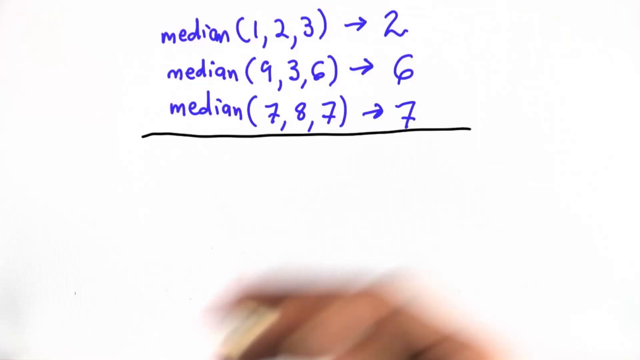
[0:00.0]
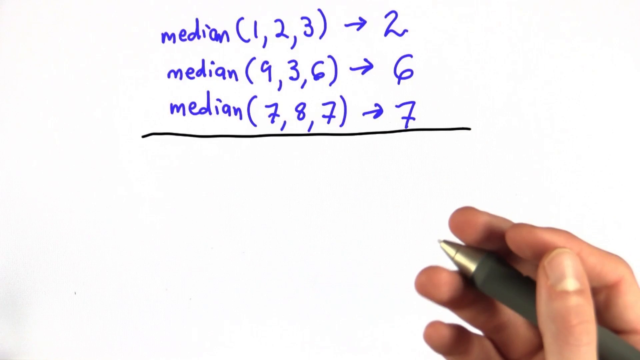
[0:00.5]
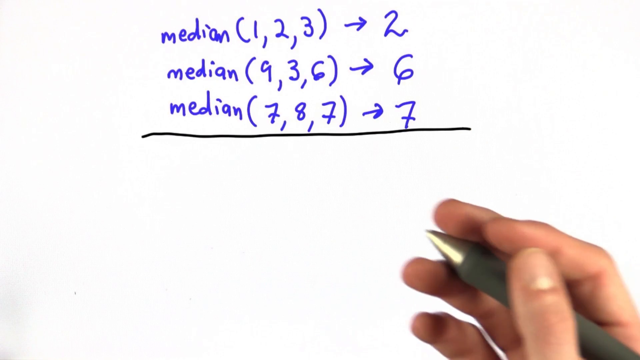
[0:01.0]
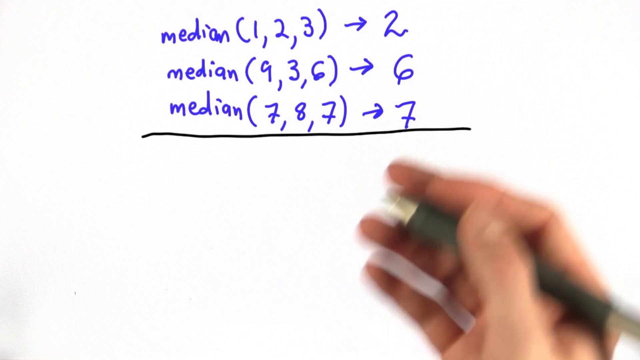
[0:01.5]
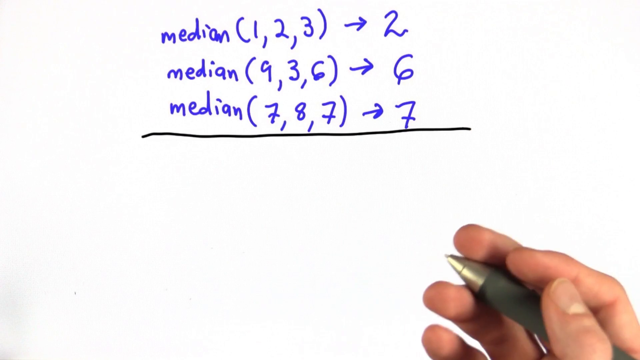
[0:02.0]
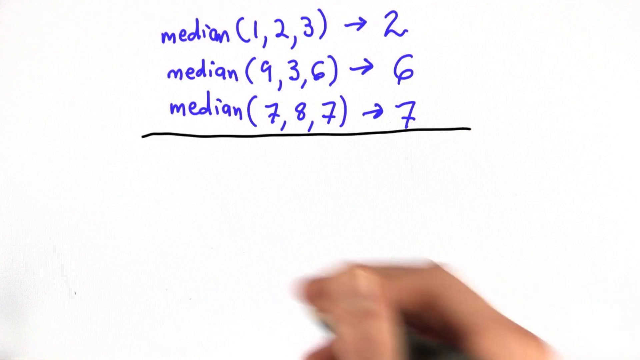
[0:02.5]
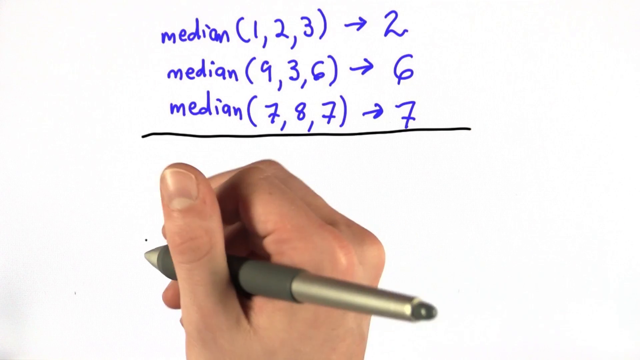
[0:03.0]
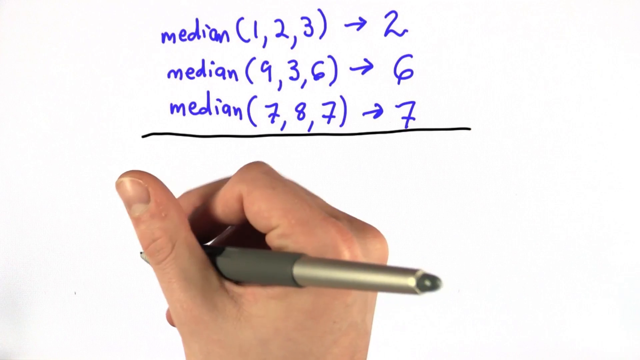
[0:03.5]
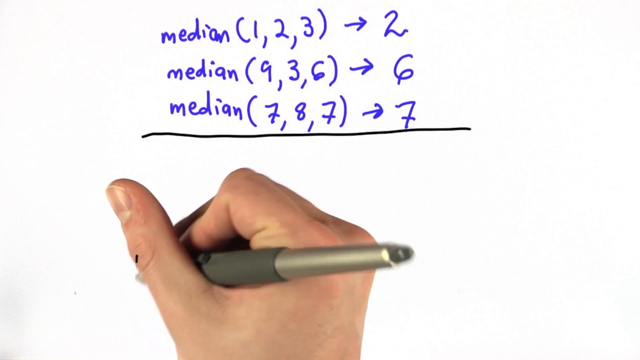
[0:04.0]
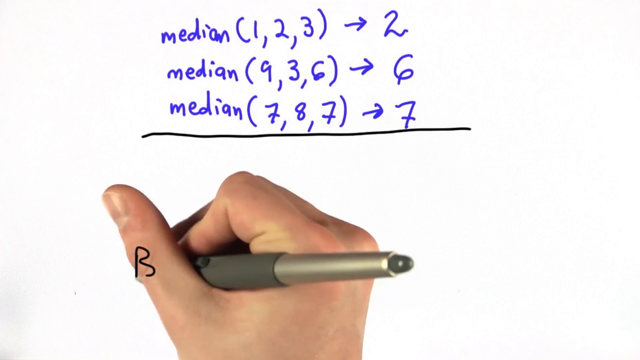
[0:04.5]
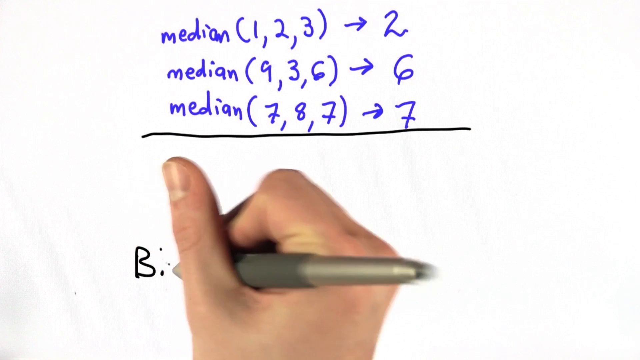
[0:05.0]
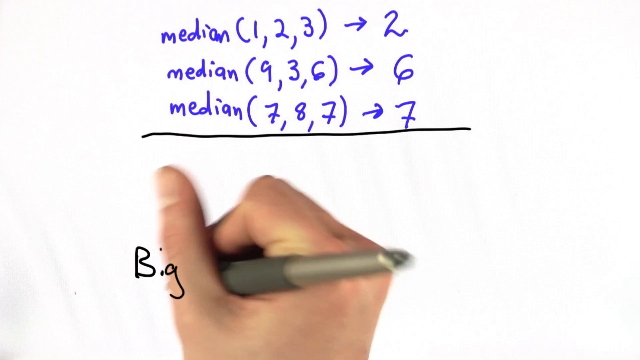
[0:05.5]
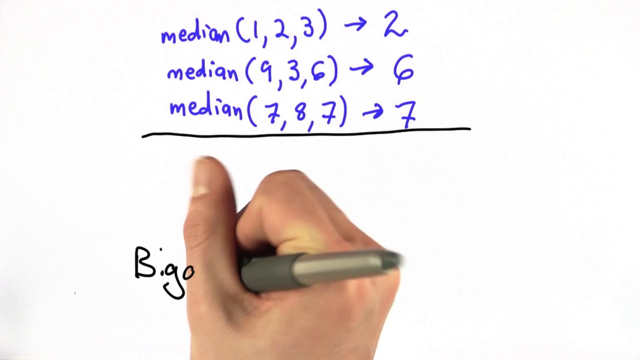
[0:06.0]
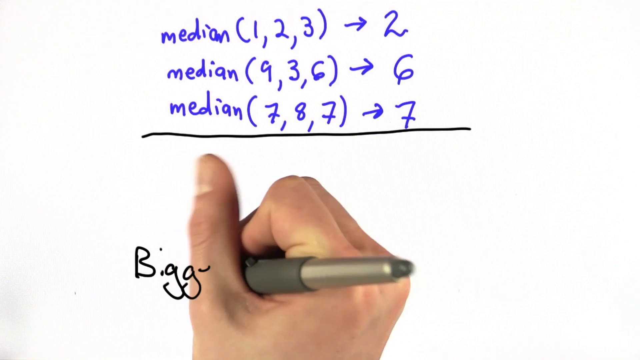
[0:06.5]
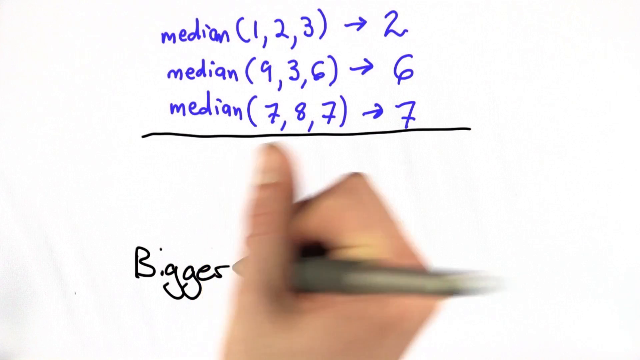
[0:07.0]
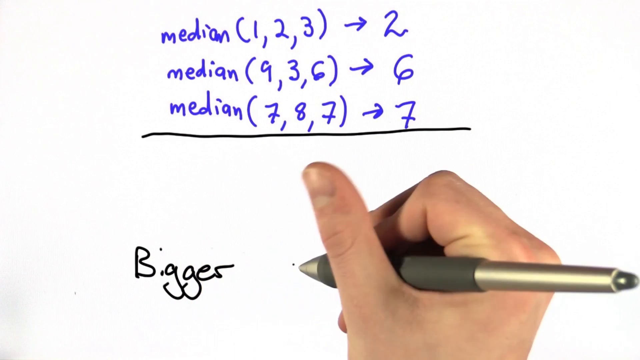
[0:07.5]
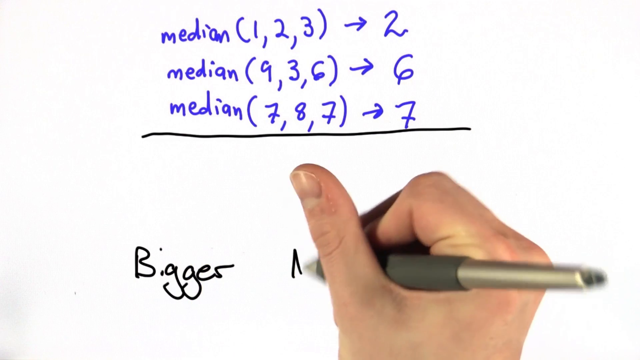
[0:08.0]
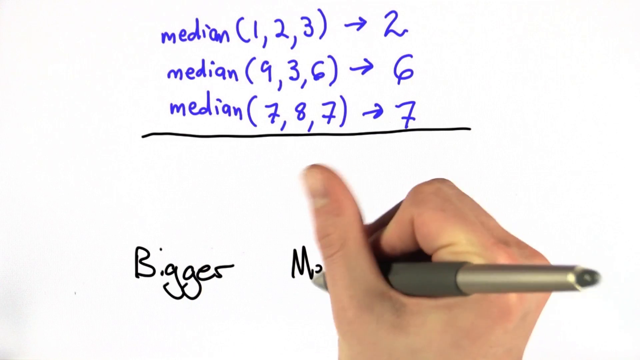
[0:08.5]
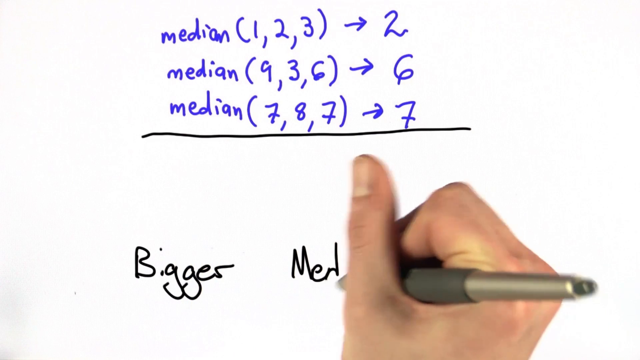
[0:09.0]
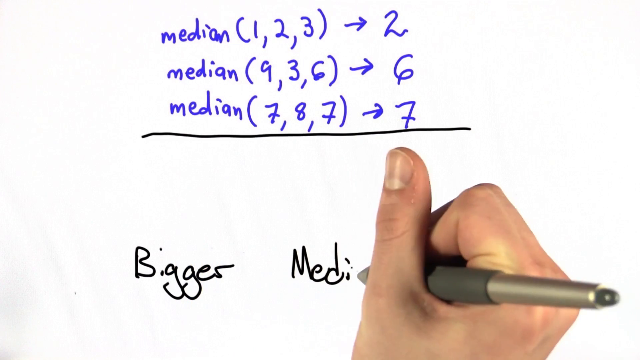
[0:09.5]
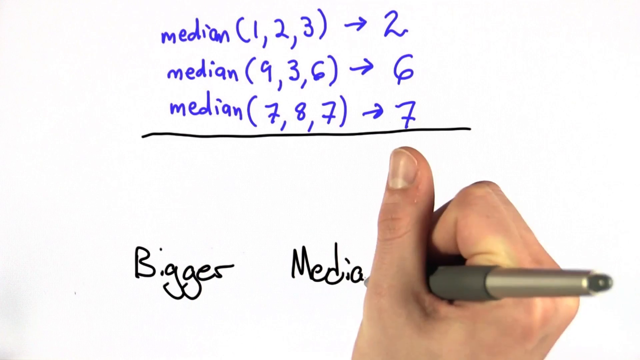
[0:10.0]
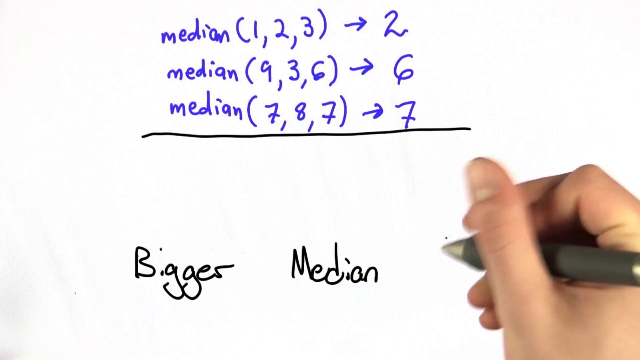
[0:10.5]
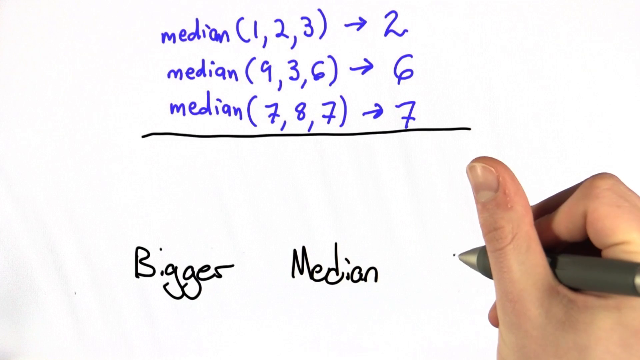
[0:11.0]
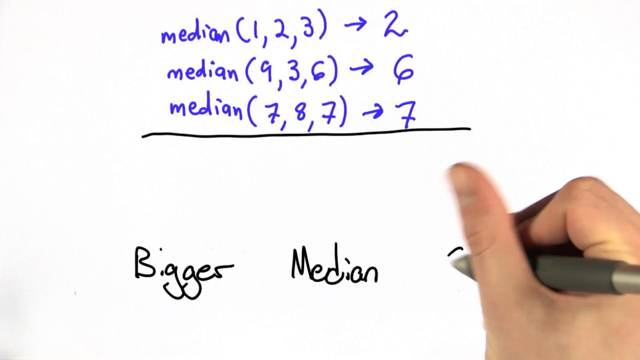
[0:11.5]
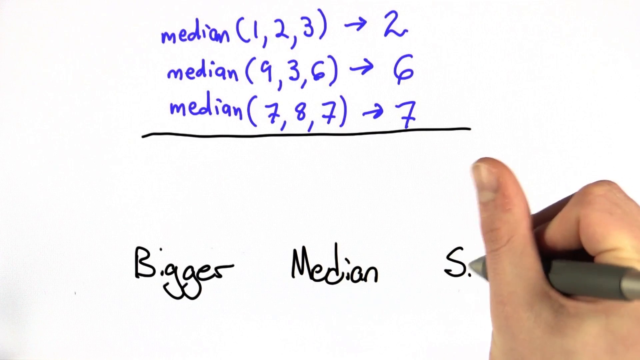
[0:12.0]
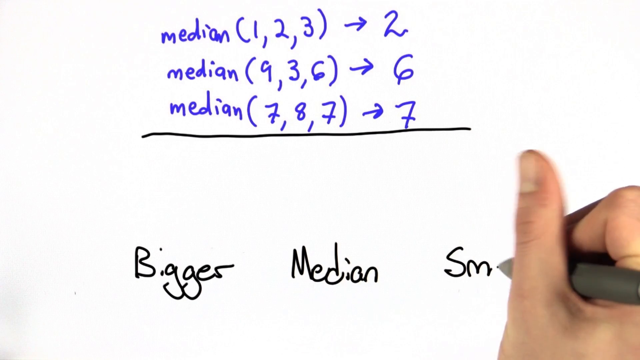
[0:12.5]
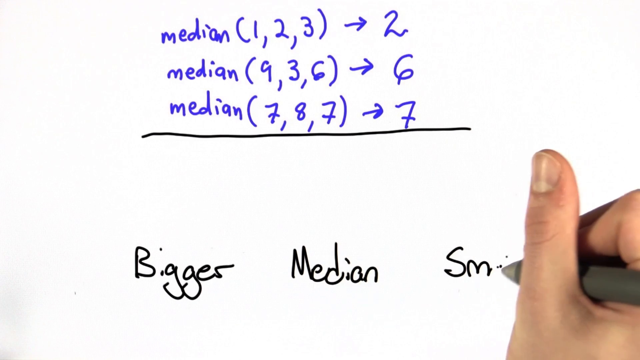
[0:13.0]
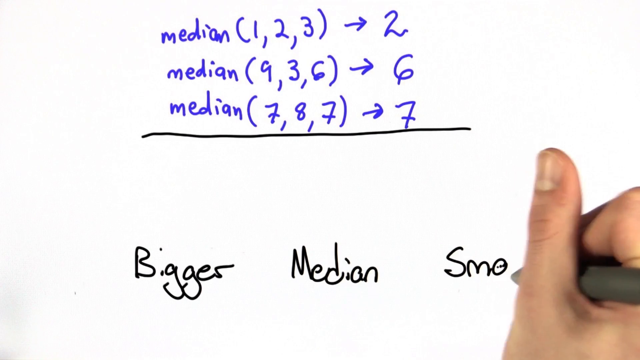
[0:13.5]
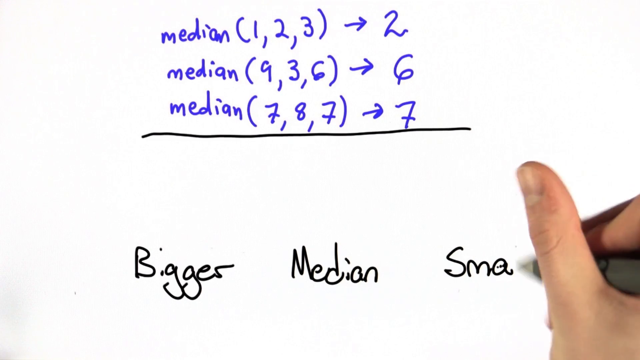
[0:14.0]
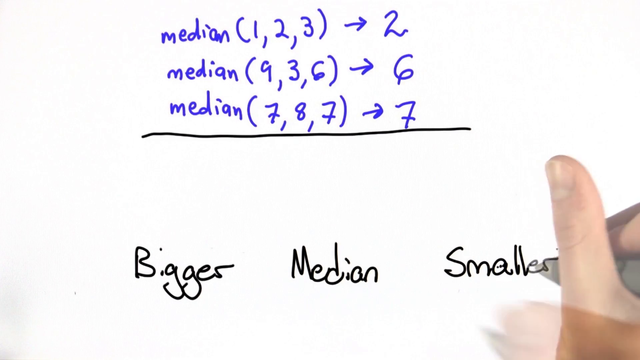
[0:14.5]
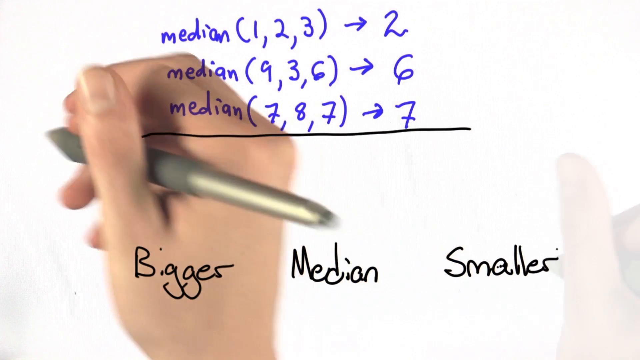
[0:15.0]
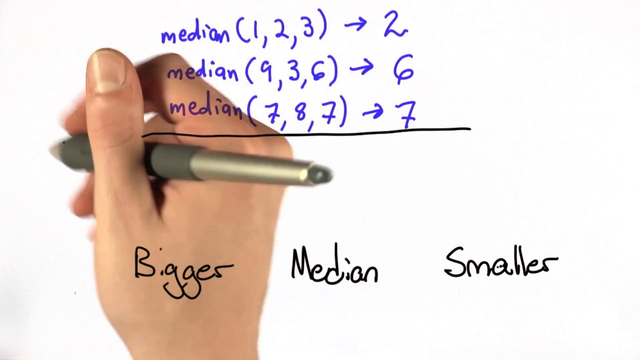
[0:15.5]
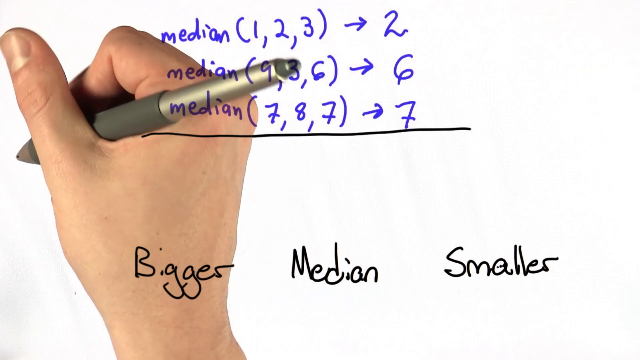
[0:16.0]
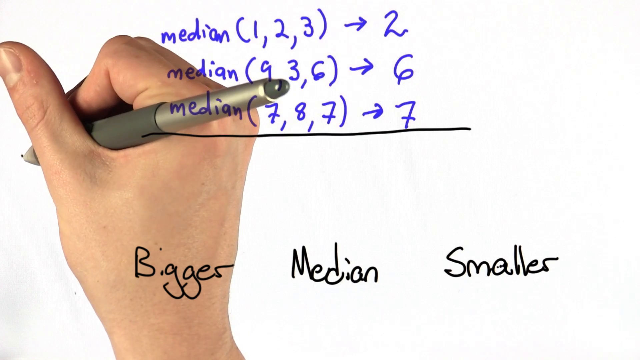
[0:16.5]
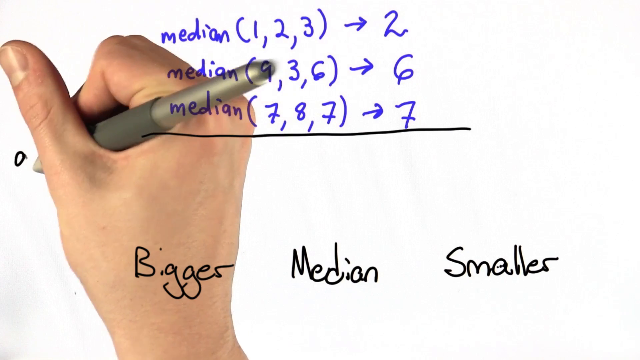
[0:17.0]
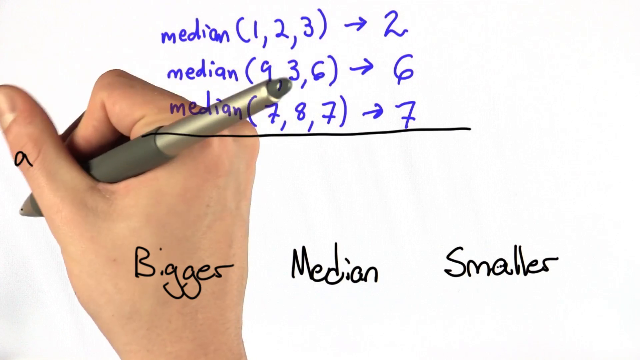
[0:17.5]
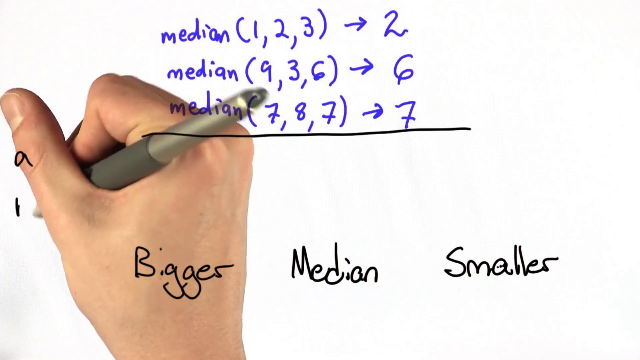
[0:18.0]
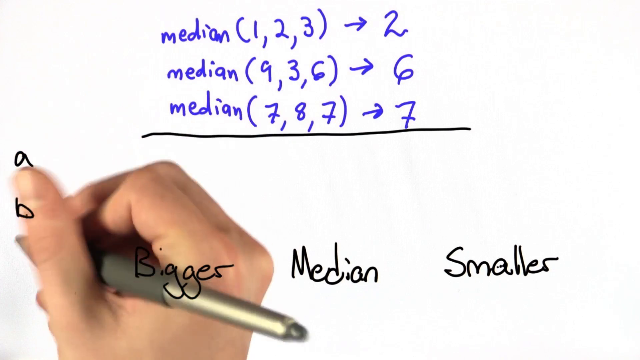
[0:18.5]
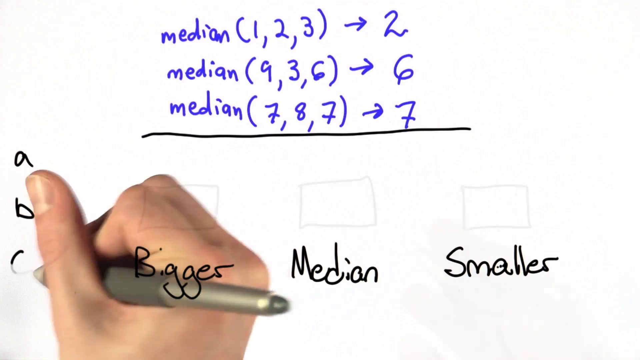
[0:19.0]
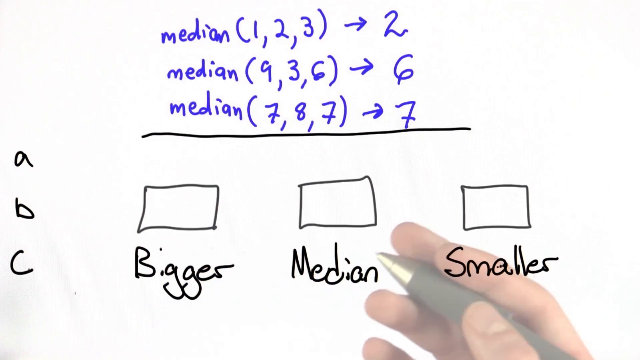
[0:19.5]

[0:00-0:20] What may be a mathematics class video shows the word "median" written out with sets of numbers in brackets. The first median is of 1, 2, 3, and the median is 2. The second is the median of 9, 3, 6, and the median is 6. The third is 7, 8, 7, and the median is 7. All of this is written in blue marker and underlined with a black mark. The words "bigger", "median" and "smaller" are also written, along with "A, B, C", and the person draws at least three boxes.